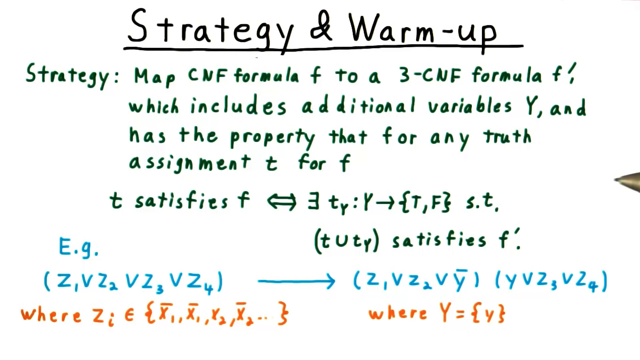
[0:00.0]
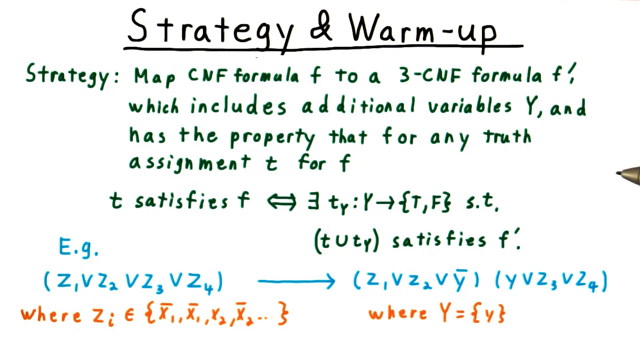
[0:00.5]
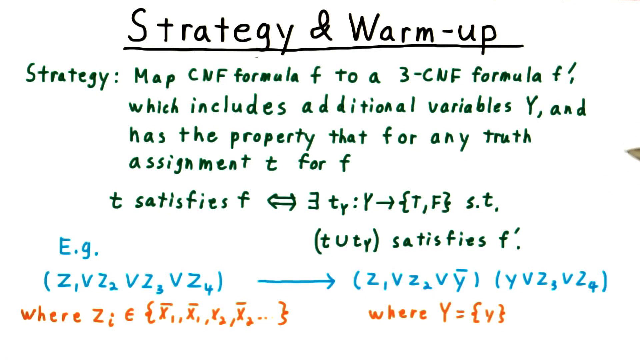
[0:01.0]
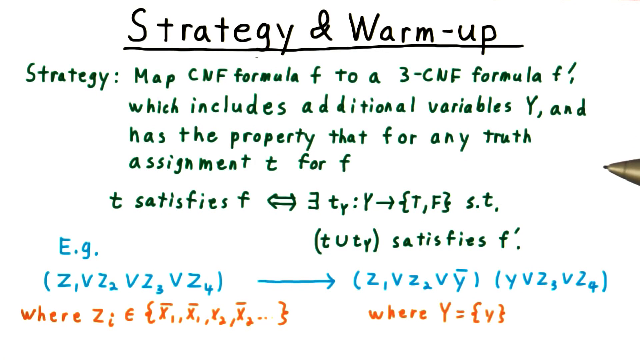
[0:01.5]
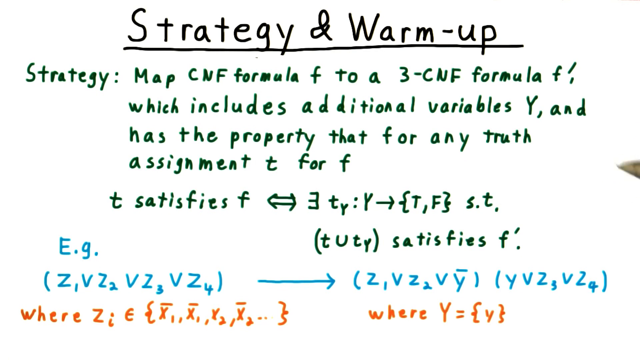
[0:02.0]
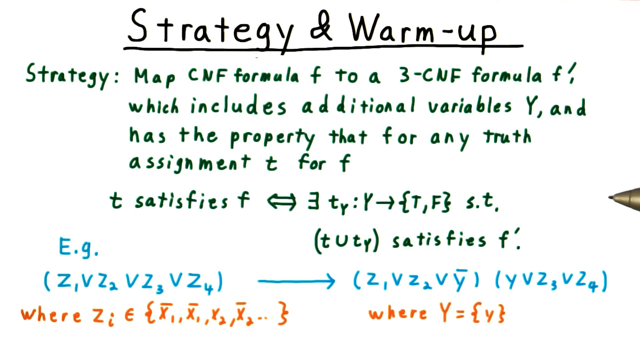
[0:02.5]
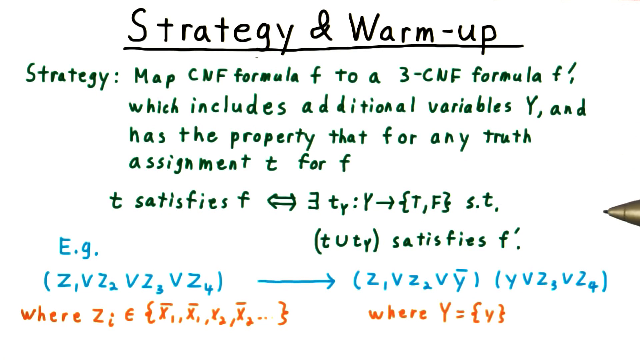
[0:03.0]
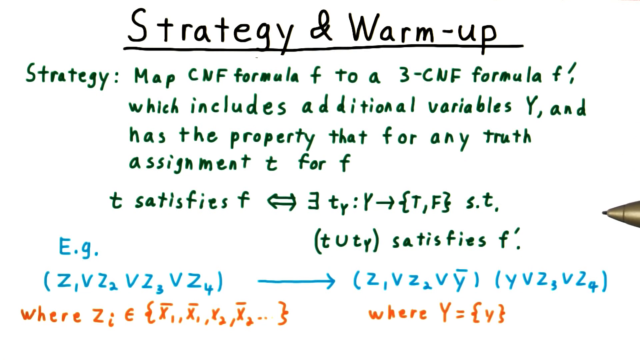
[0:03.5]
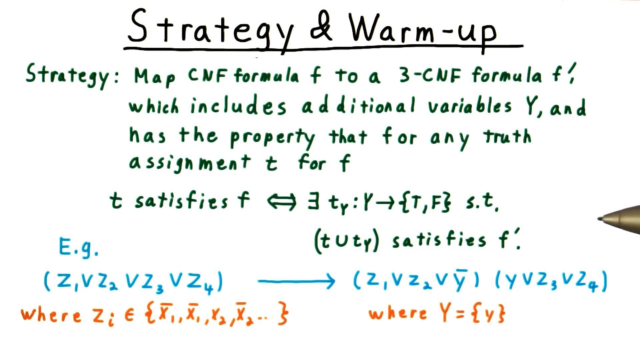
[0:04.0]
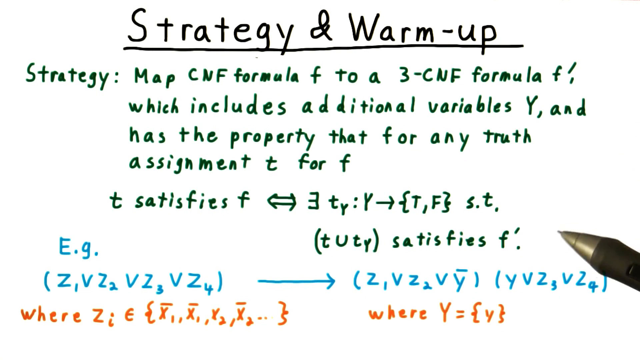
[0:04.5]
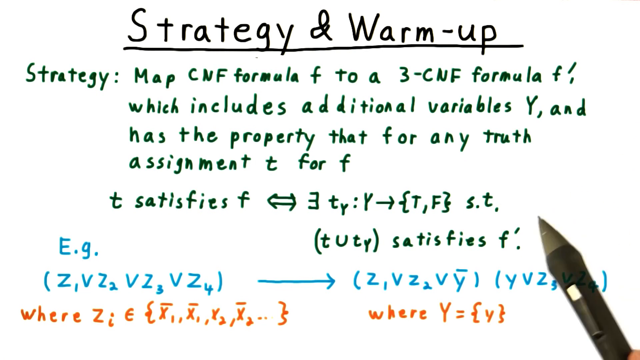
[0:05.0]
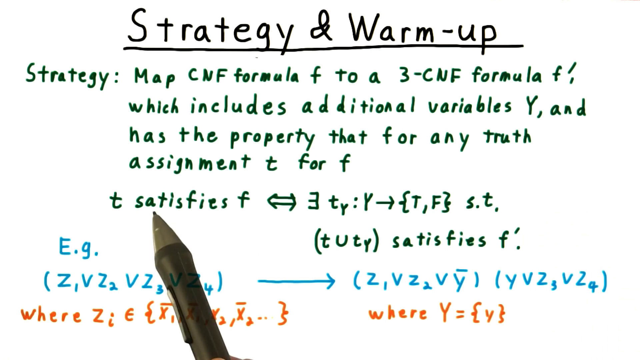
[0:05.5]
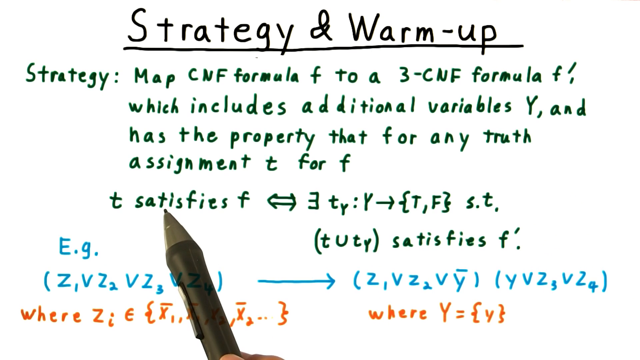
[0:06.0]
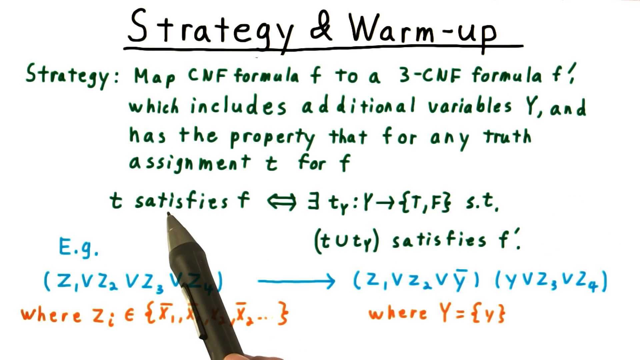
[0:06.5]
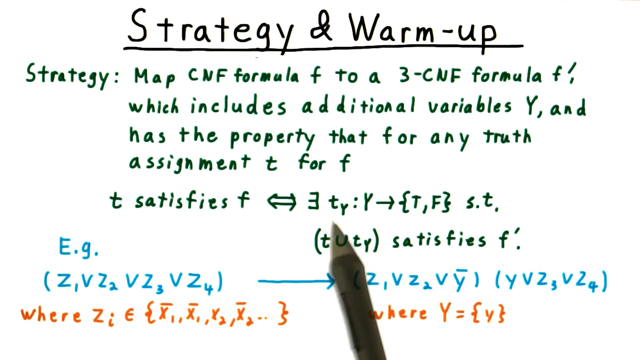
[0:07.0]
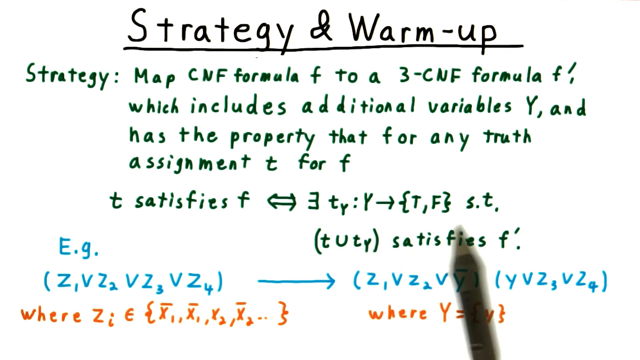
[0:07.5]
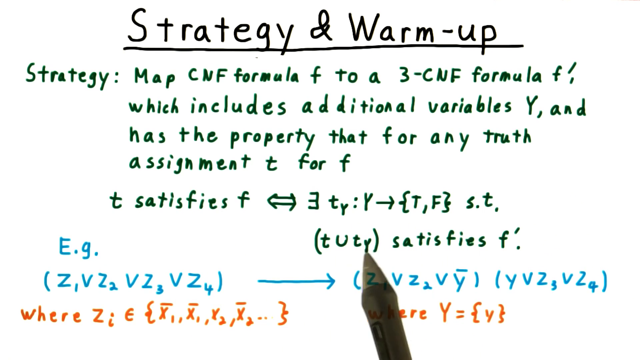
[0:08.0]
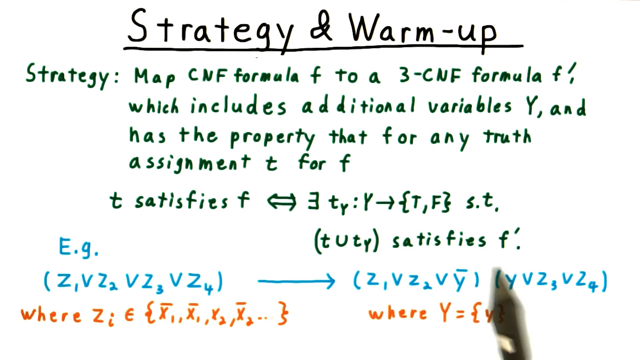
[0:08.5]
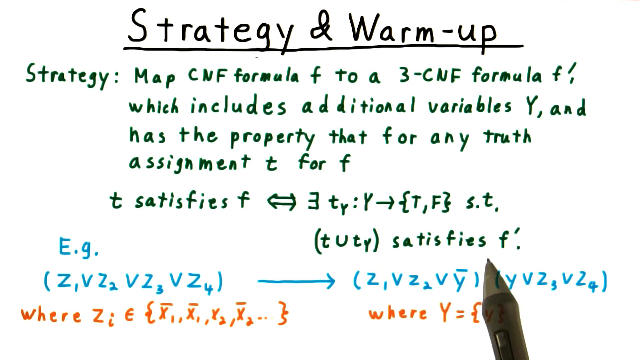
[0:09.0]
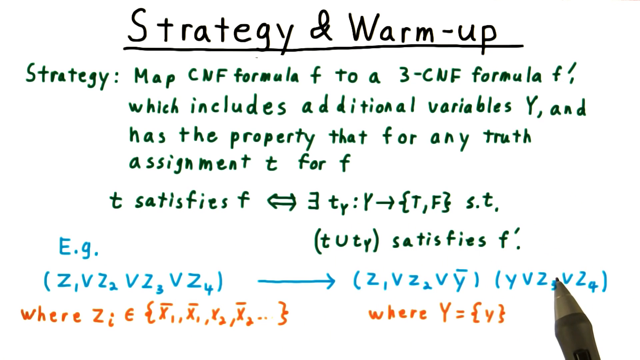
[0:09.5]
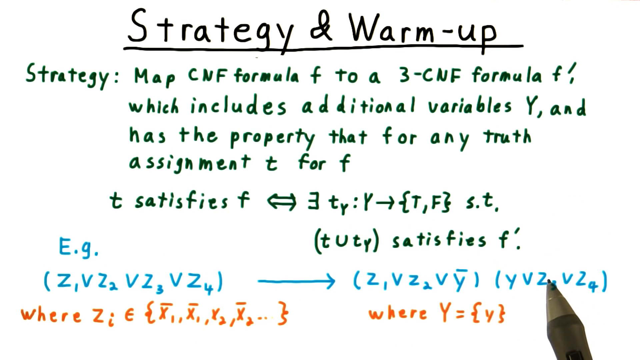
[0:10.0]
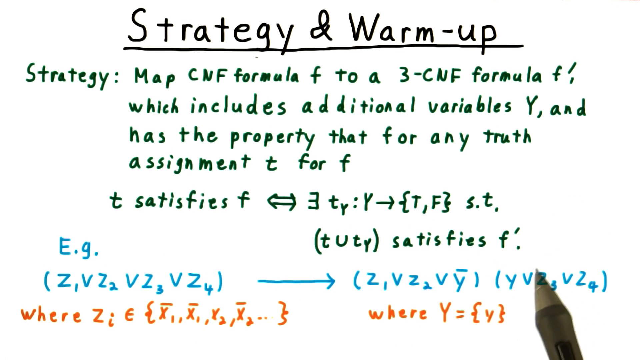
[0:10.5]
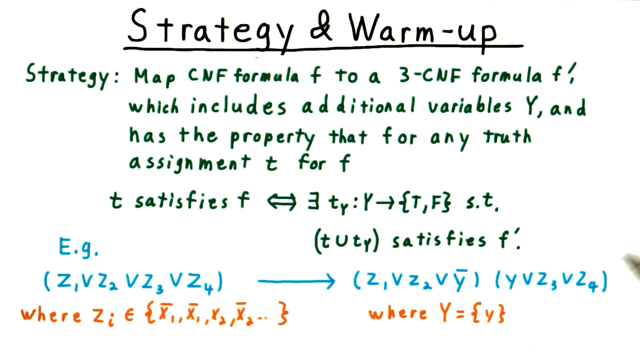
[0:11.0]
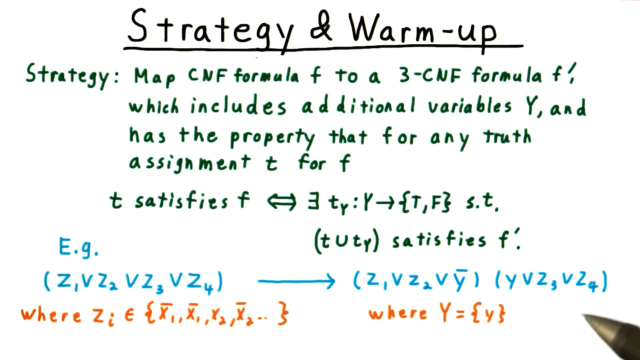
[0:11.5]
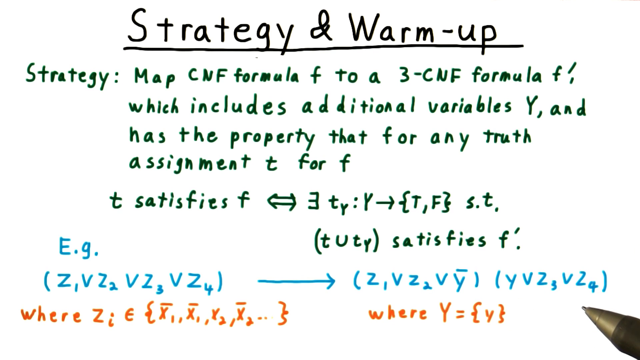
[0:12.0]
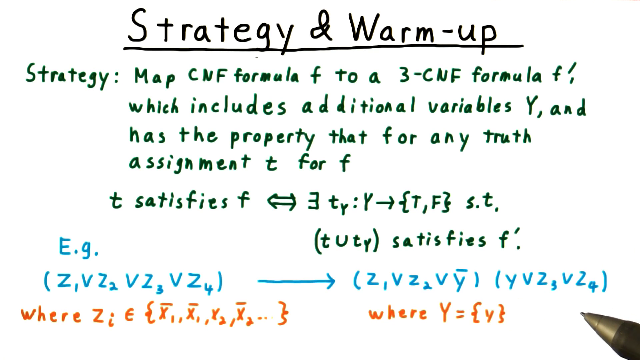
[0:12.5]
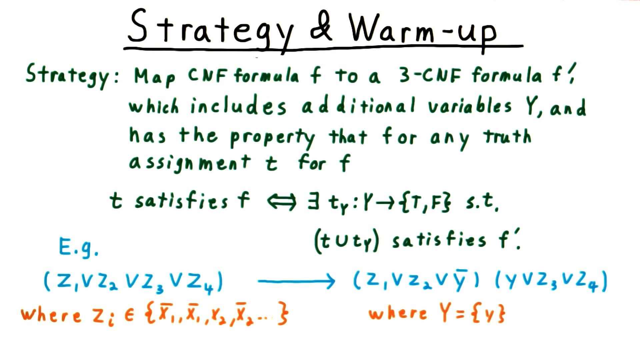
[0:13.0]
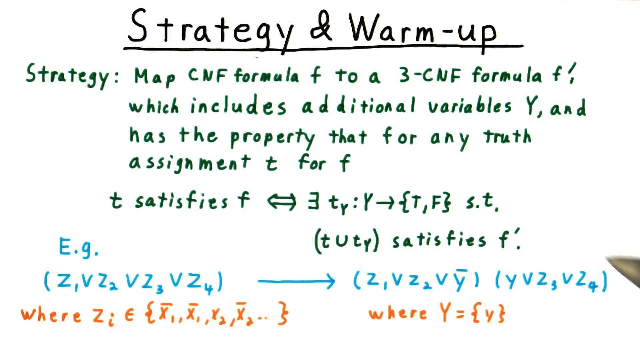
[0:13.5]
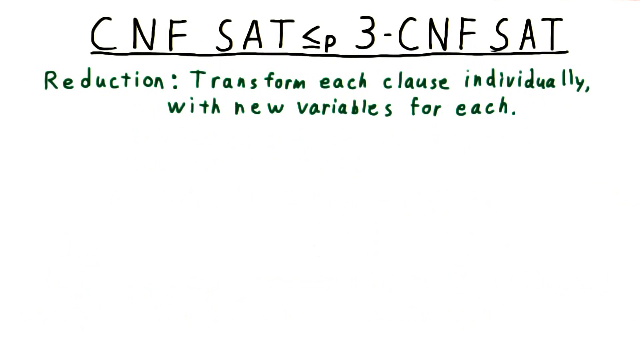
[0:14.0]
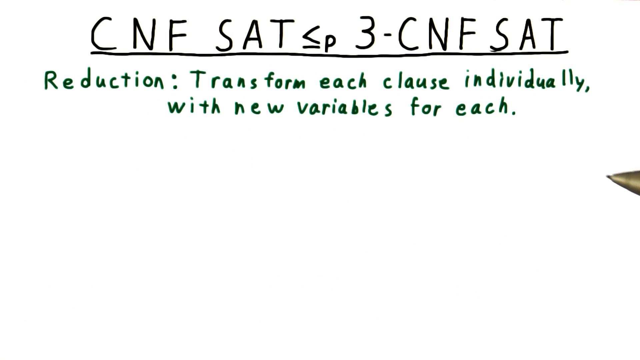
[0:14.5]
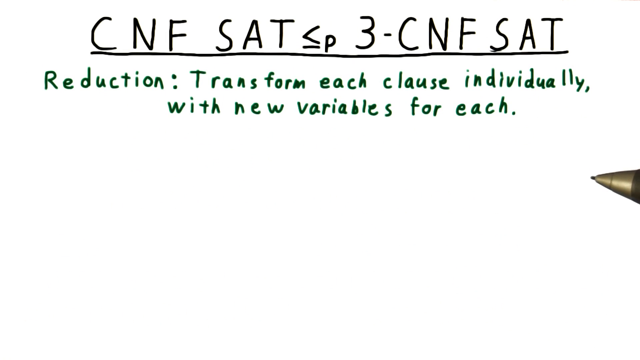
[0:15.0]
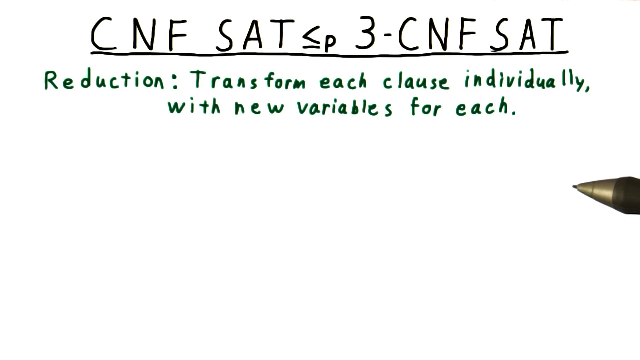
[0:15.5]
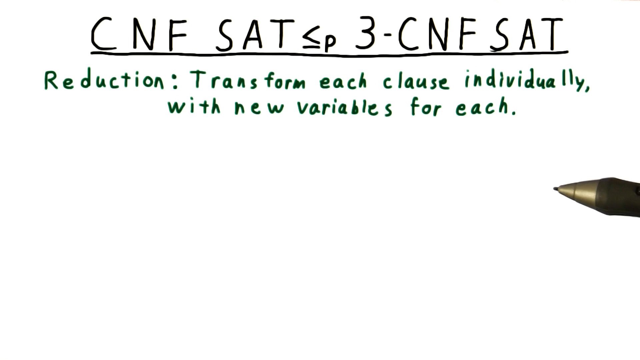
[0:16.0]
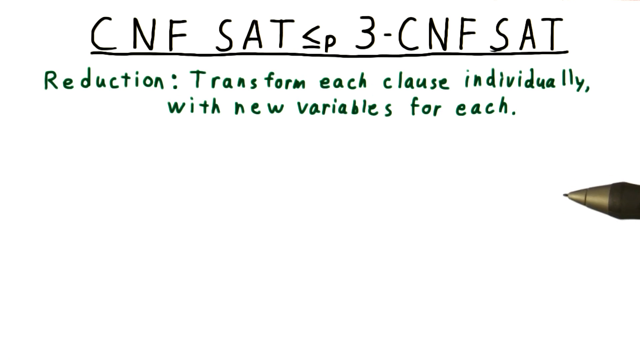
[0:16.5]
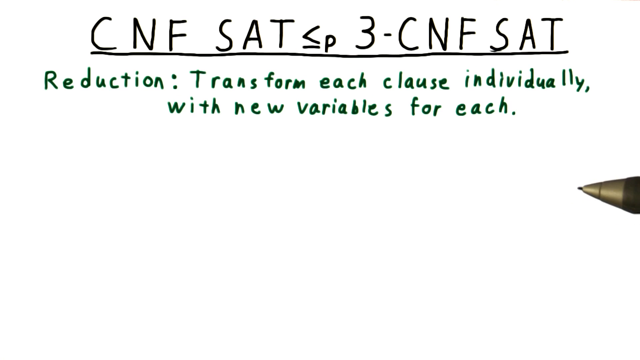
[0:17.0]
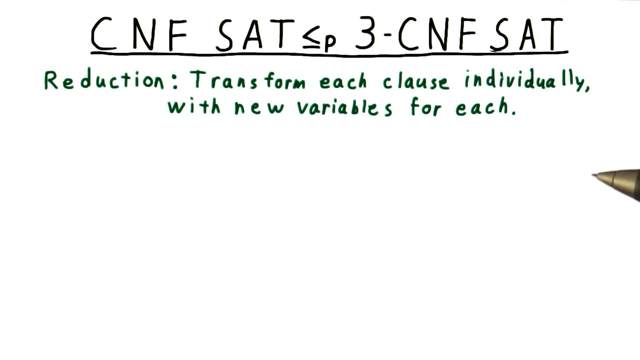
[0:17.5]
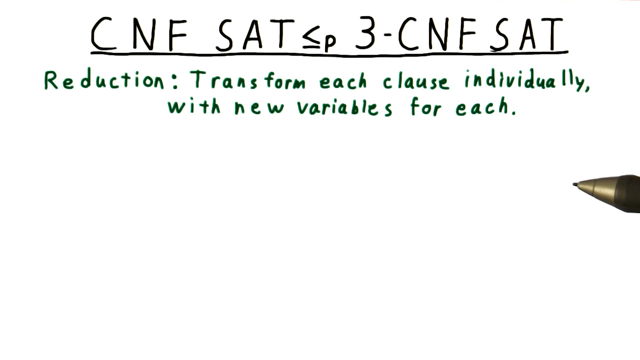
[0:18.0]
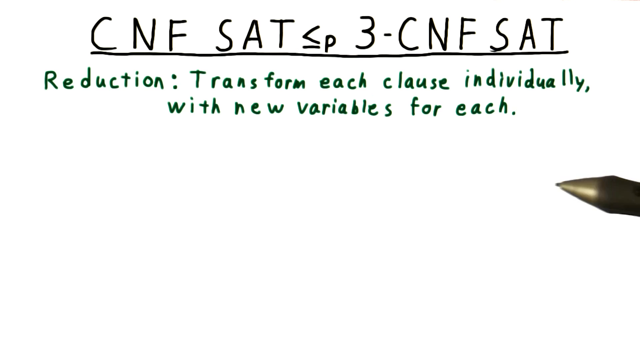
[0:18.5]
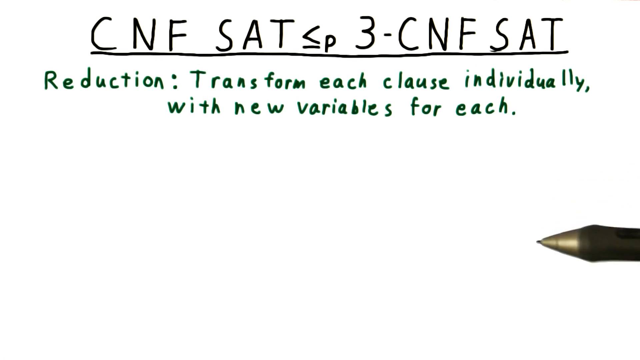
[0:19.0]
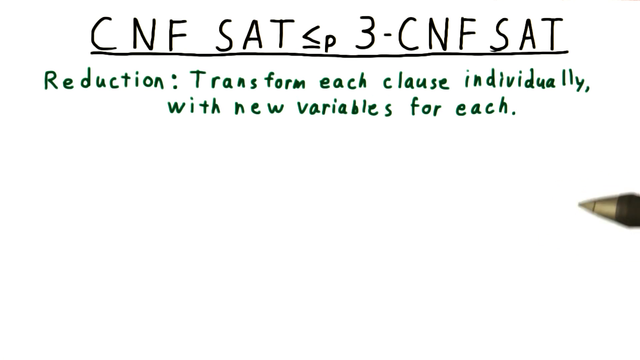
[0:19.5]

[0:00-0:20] The video opens on a screen with a white background and writing on it. At the top is the title "strategy and warmup" in black marker, underlined. Beneath it, dark green text reads "strategy map cnf formula f to a three cnf formula f which includes additional variables y and has the property that for any truth assignment t for f." Below that it reads "t satisfies f," with an equation to the right and an arrow beside it. A person's pen appears on the screen, pointing at the text as it is read, first going over the green text at the top and then moving down to blue text that shows examples of the equation's variables and other letters. Below that is some orange text. The screen then fades to another white screen with a new underlined title in black marker and green text below it, while the pen moves around slightly on the right side.